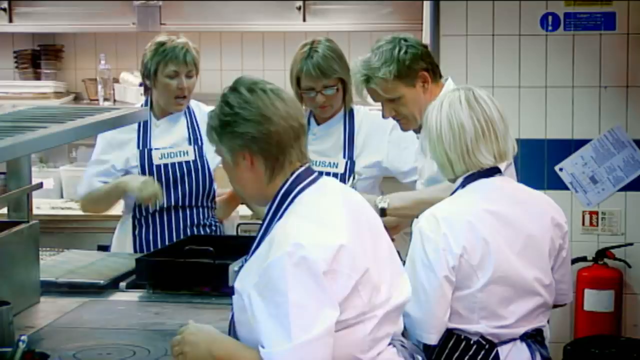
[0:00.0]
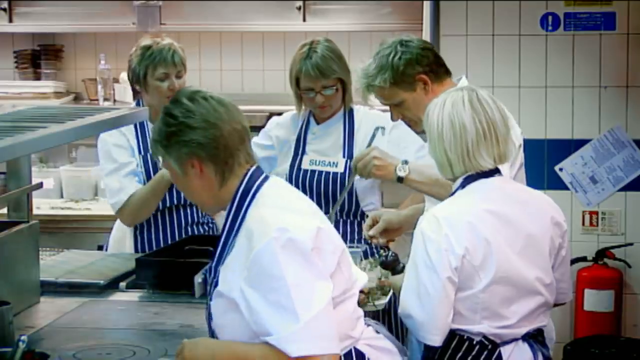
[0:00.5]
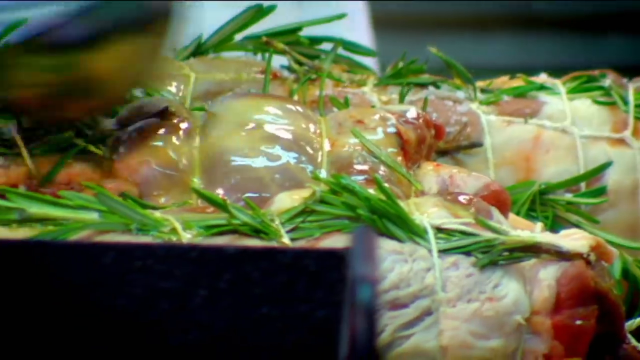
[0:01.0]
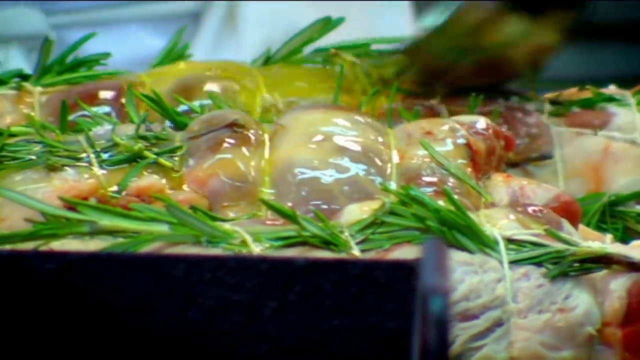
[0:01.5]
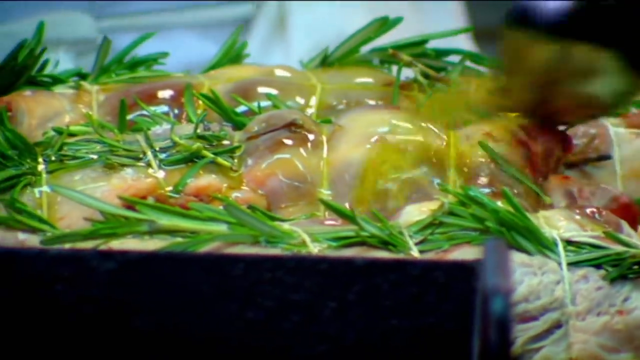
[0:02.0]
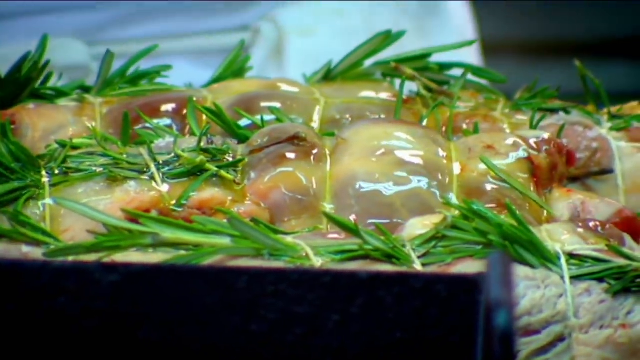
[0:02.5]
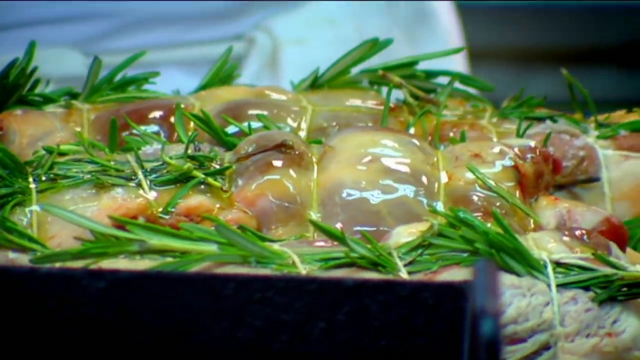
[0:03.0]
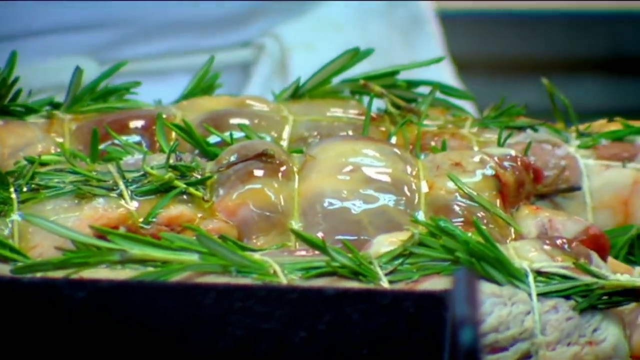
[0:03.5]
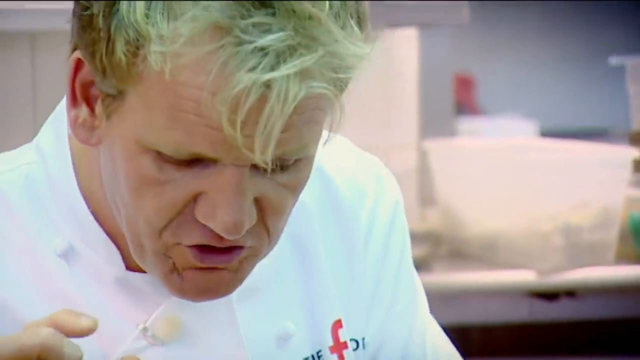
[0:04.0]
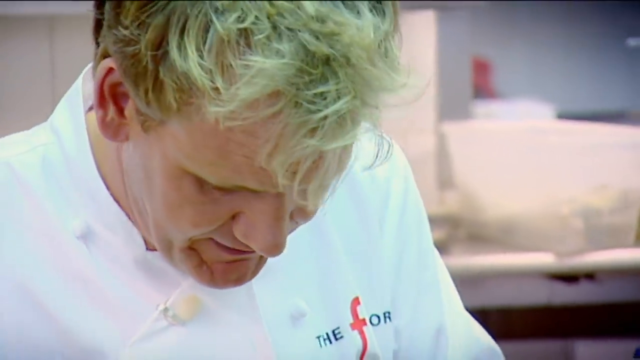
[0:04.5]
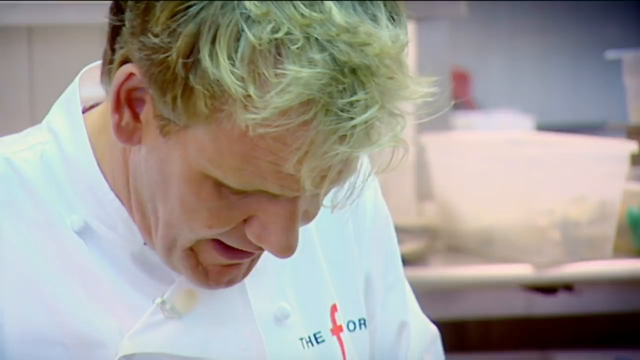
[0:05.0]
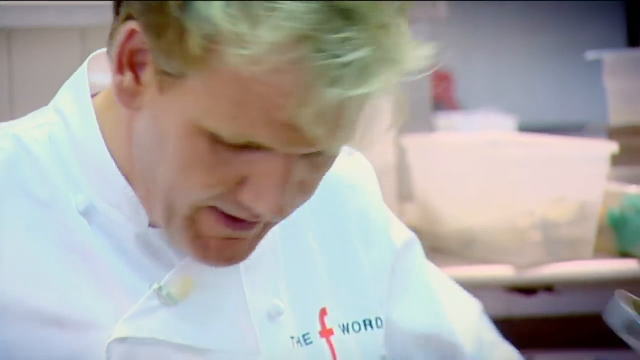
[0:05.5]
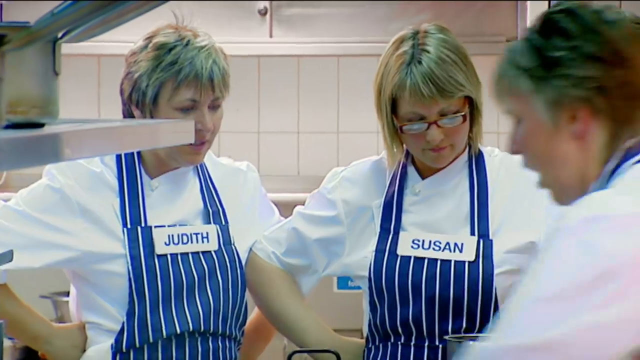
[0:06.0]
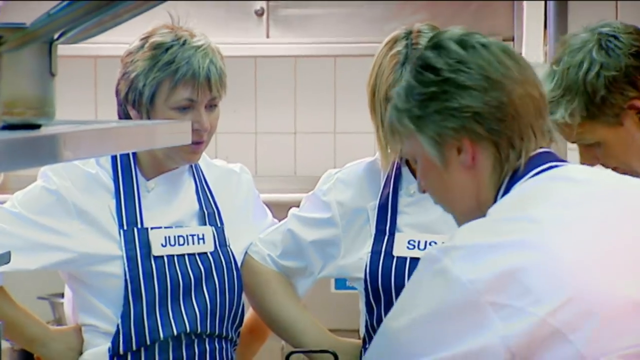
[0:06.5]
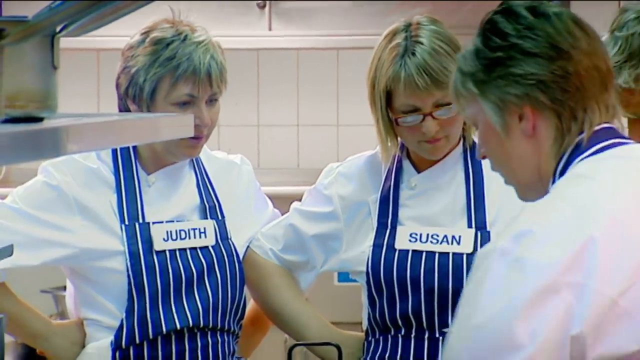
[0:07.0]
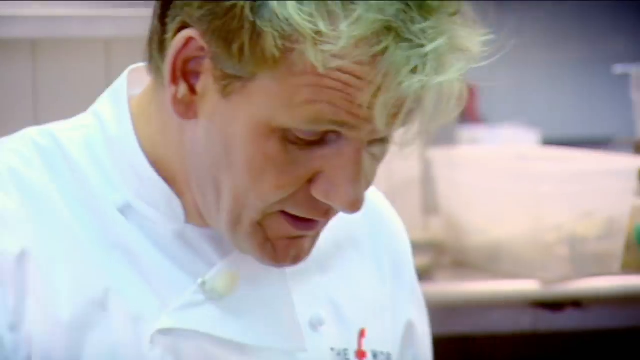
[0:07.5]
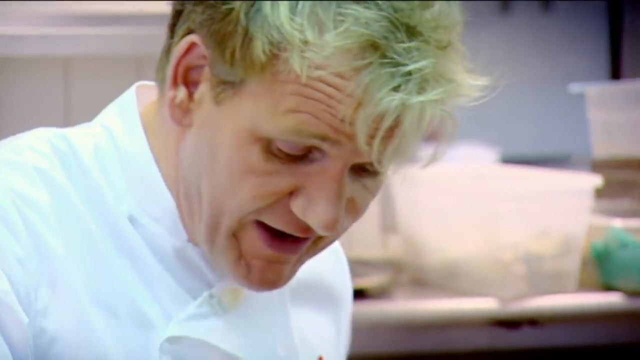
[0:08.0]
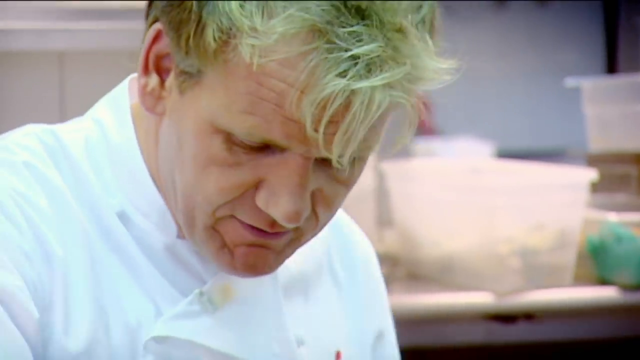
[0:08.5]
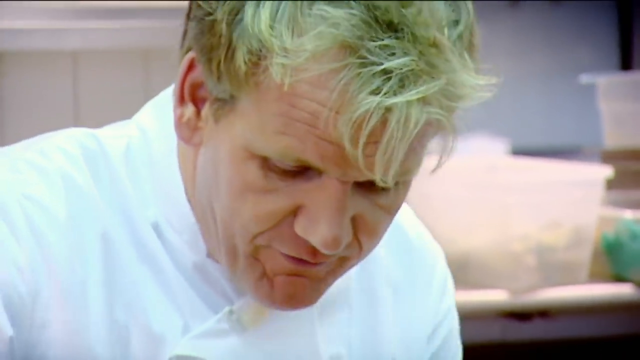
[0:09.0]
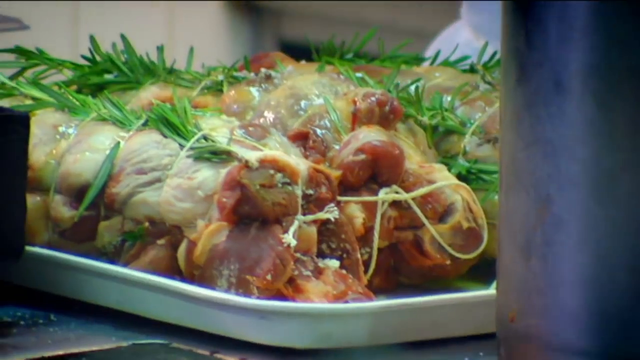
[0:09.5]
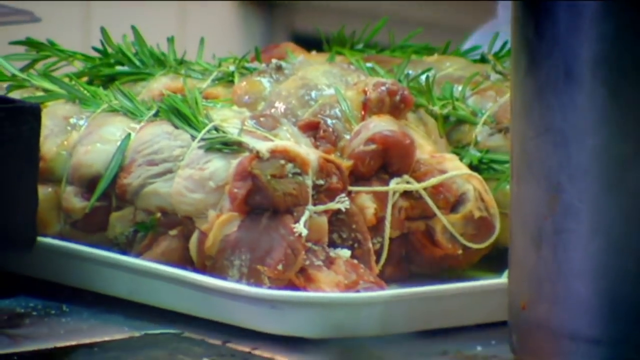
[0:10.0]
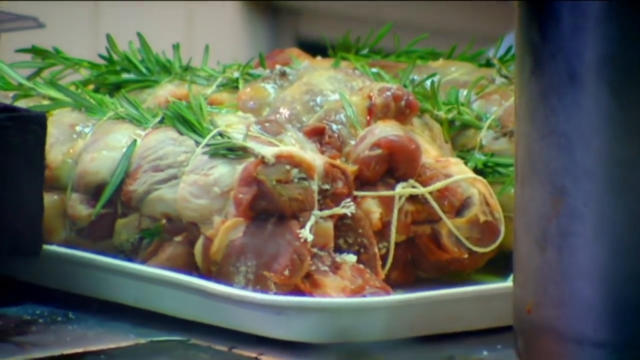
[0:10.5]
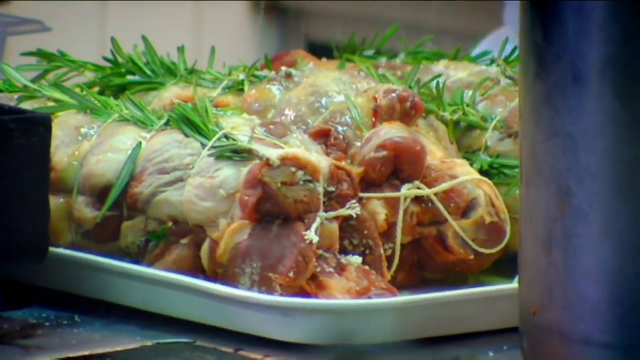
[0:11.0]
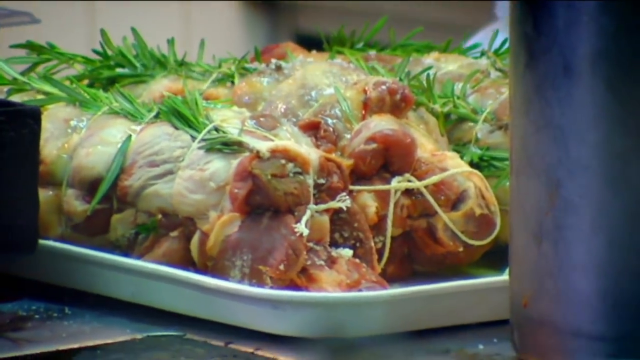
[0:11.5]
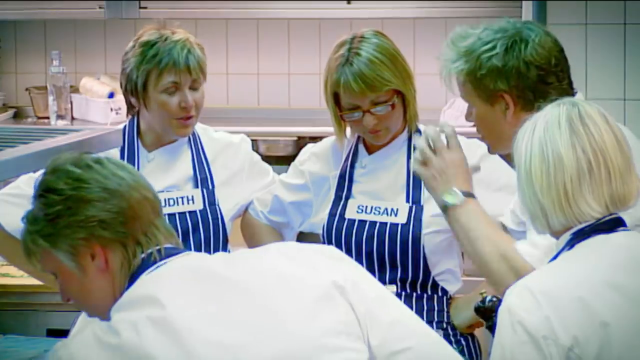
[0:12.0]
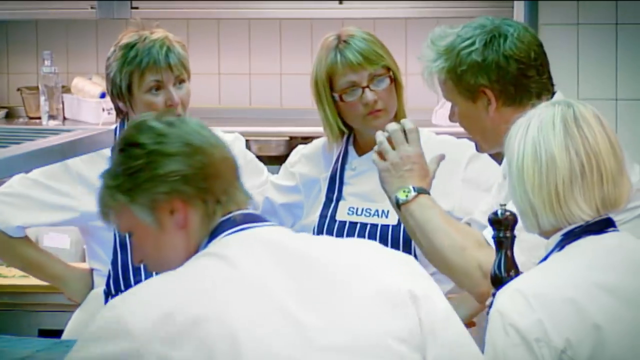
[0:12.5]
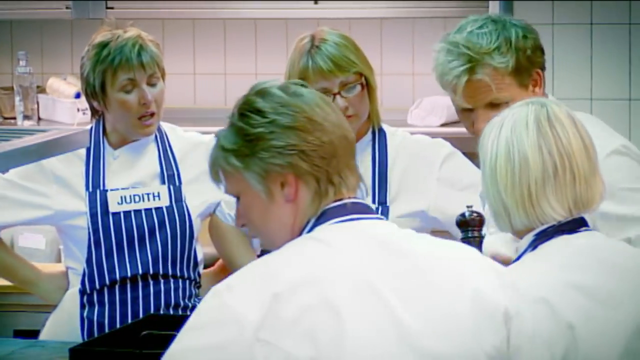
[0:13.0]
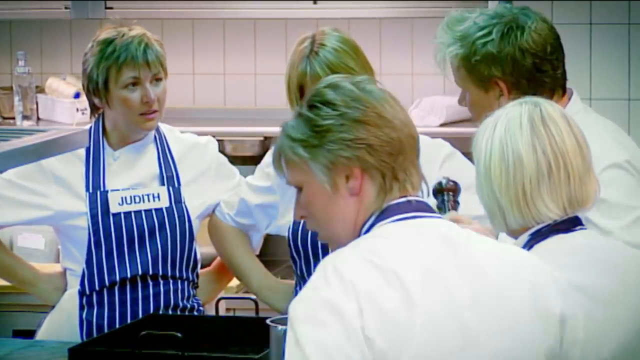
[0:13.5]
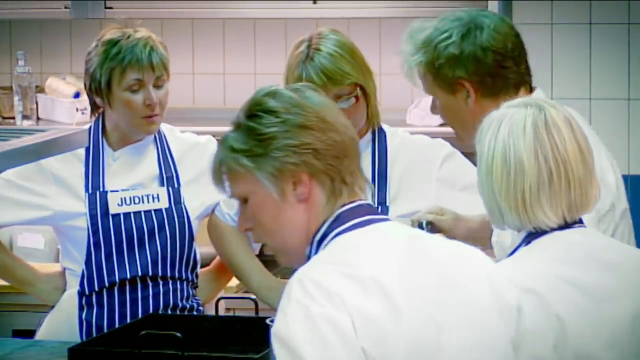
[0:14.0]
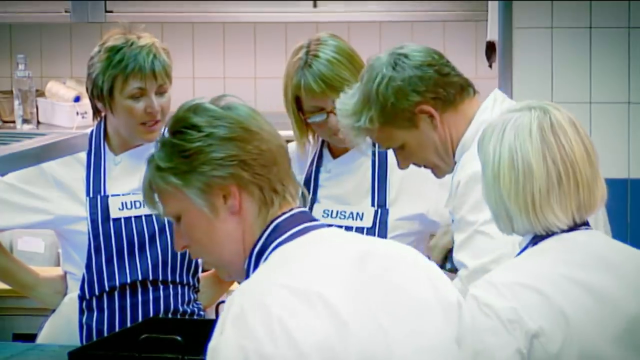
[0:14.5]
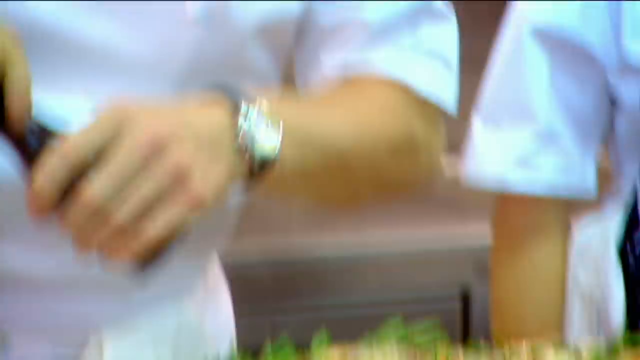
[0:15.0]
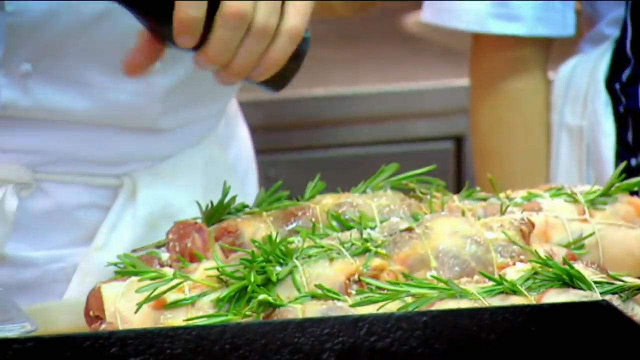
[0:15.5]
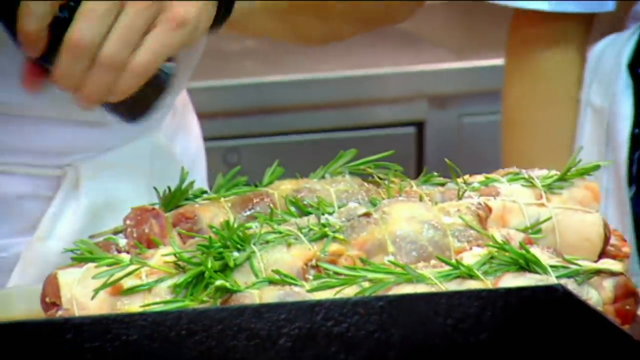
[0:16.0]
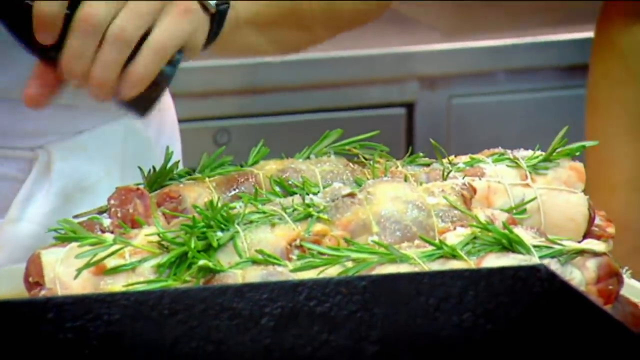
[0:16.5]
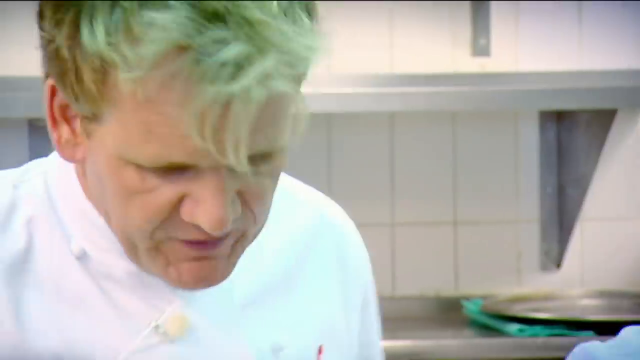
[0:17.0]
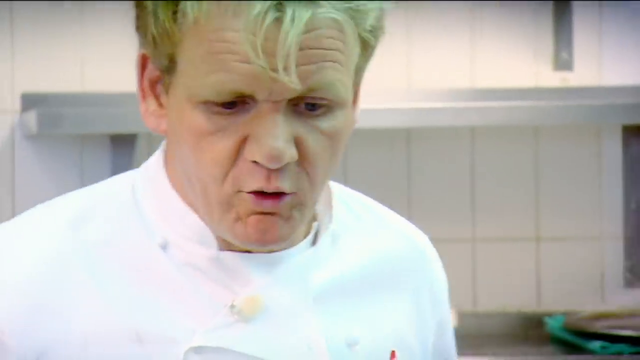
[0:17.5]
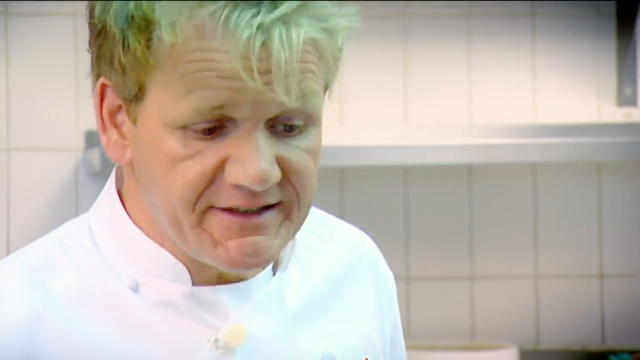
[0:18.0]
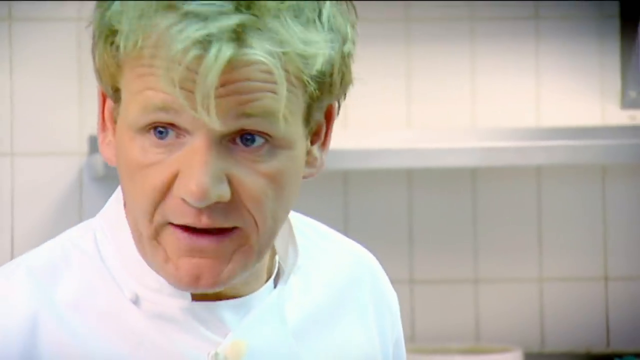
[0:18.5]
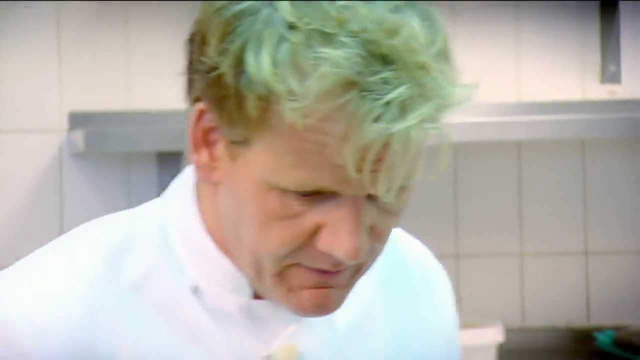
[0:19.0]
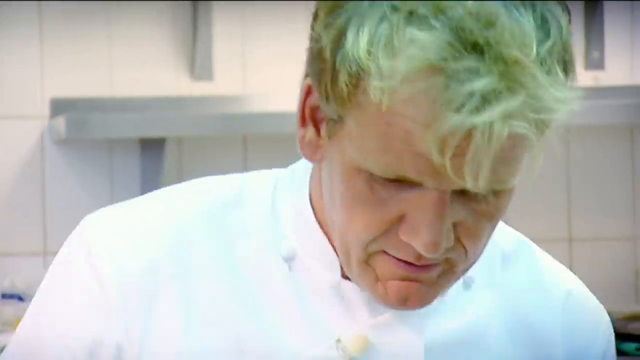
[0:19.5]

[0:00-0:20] Chefs are in a kitchen making meat. A large, full piece of meat that is tied is being garnished, and oil is poured on it. Chefs surround the meat as it is shown to them by one man who seems to be the head chef; he is teaching them. He seasons the meat while talking and explaining, and the chefs listen attentively. Two of the chefs shown are Judith and Susan. The chefs are dressed in white with blue striped aprons. The man continues showing them how the meat is seasoned and prepared, and the very large piece of meat is visible as he works on it in the kitchen.